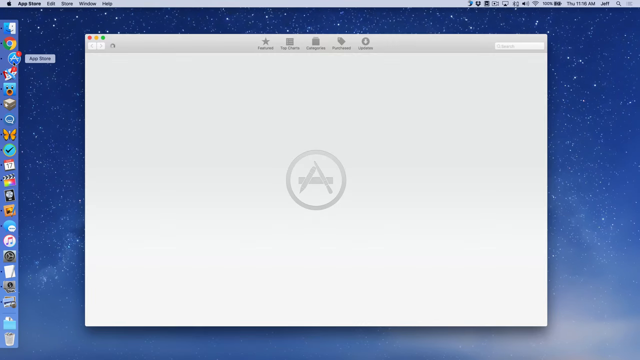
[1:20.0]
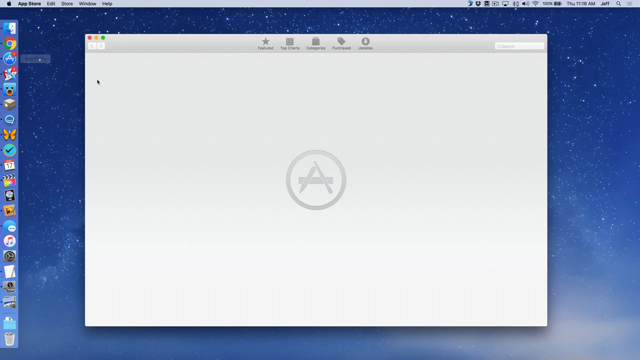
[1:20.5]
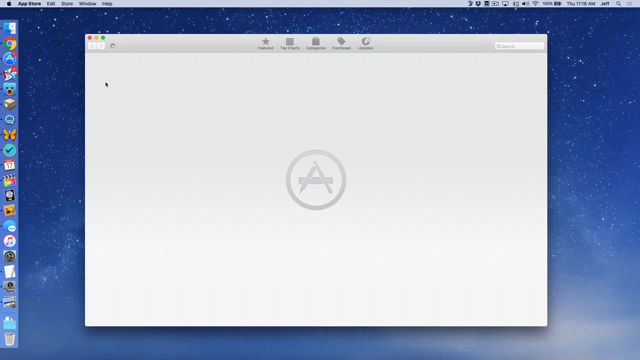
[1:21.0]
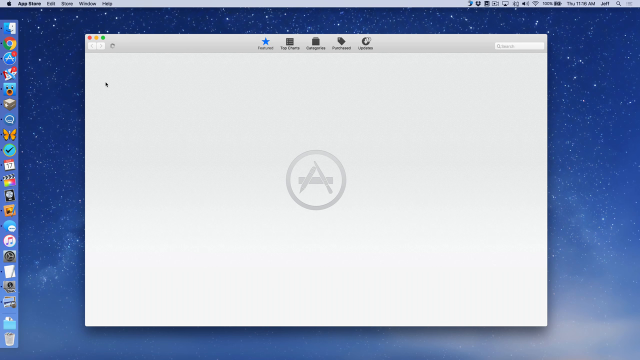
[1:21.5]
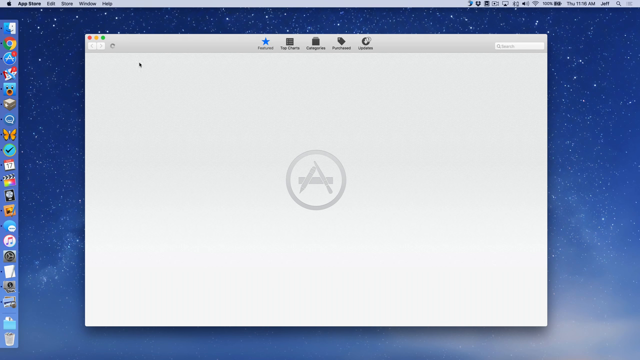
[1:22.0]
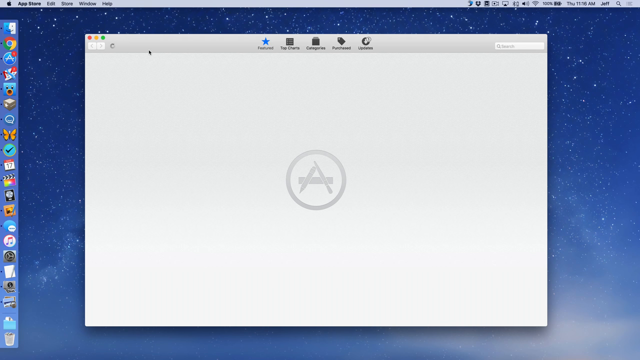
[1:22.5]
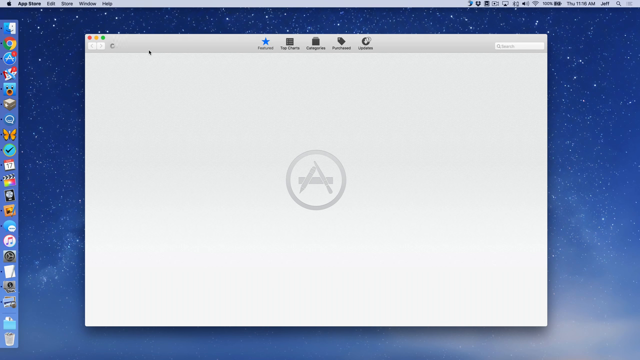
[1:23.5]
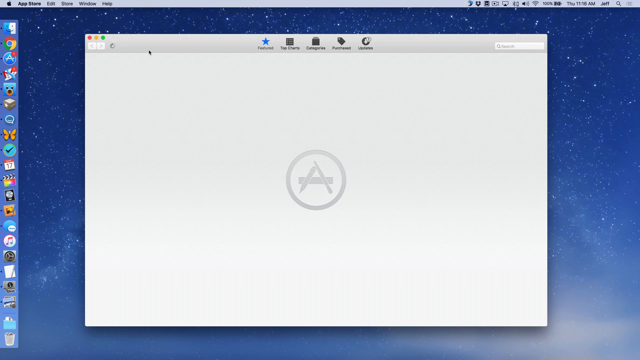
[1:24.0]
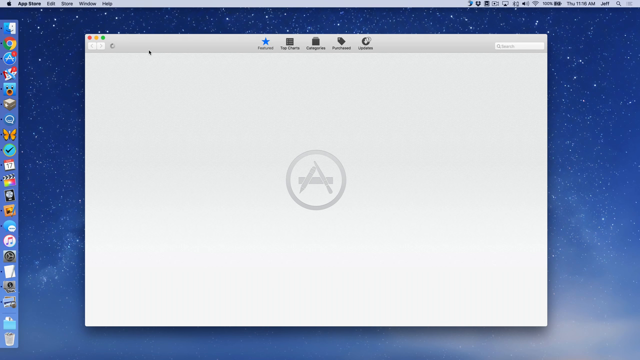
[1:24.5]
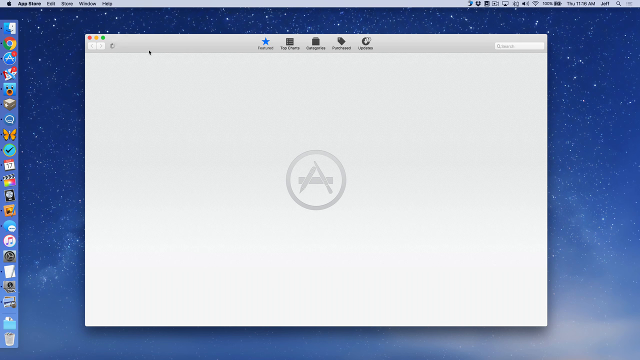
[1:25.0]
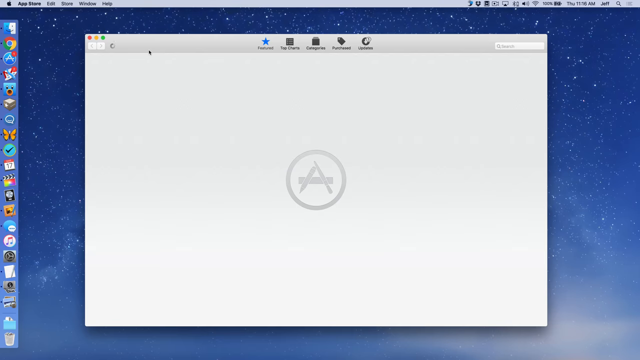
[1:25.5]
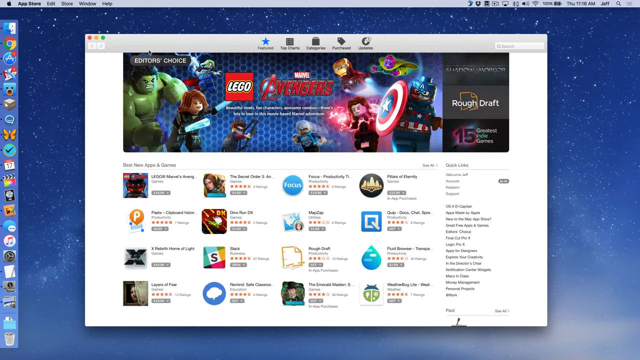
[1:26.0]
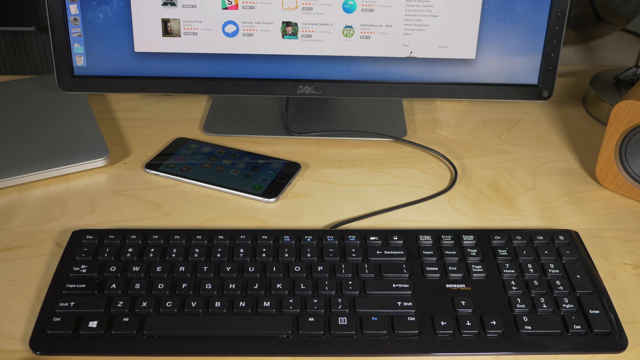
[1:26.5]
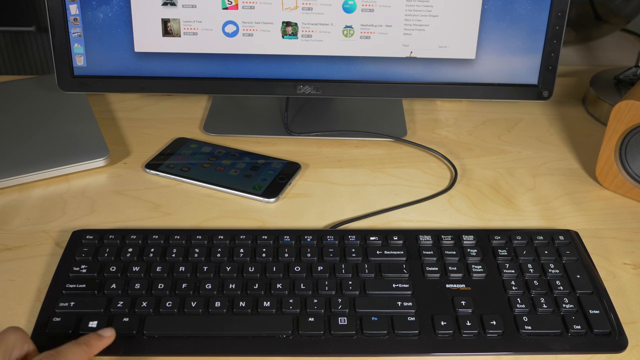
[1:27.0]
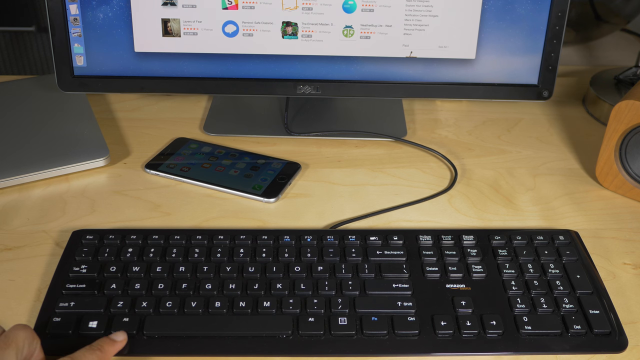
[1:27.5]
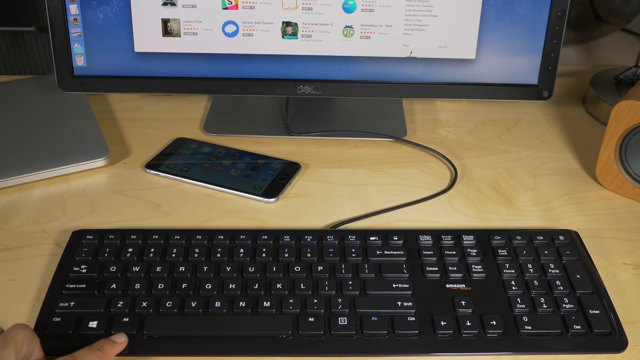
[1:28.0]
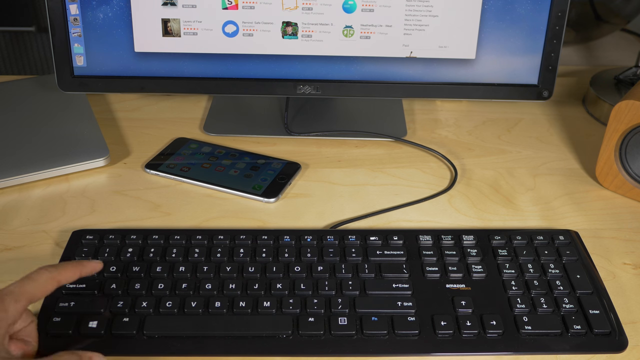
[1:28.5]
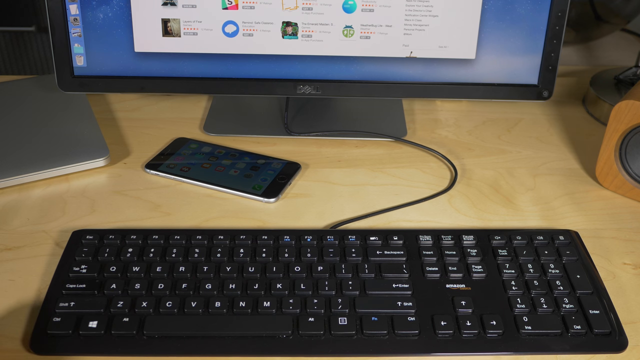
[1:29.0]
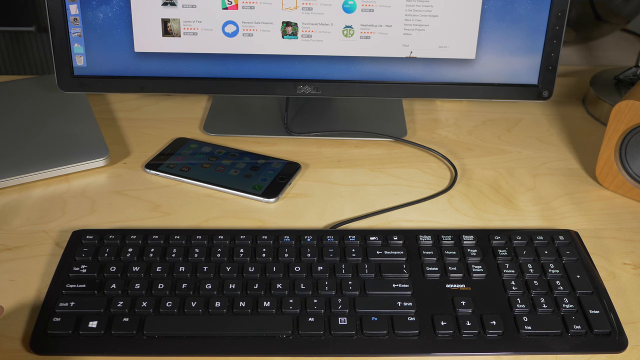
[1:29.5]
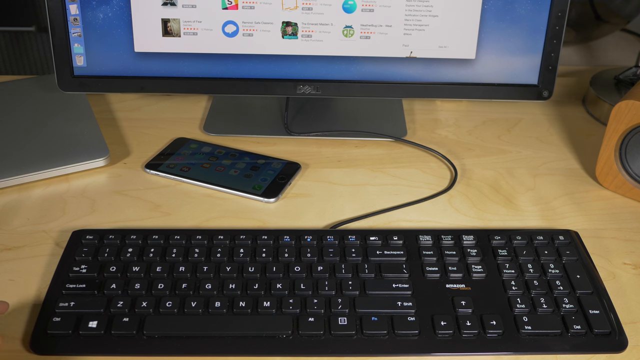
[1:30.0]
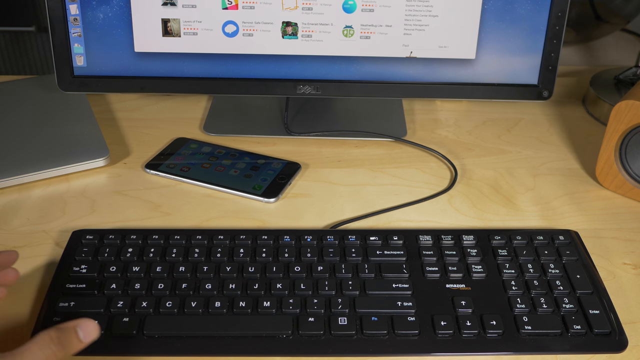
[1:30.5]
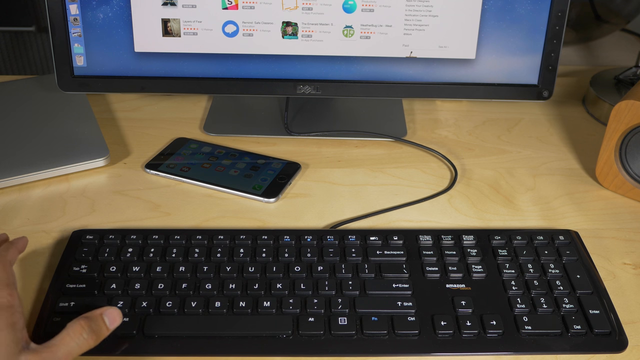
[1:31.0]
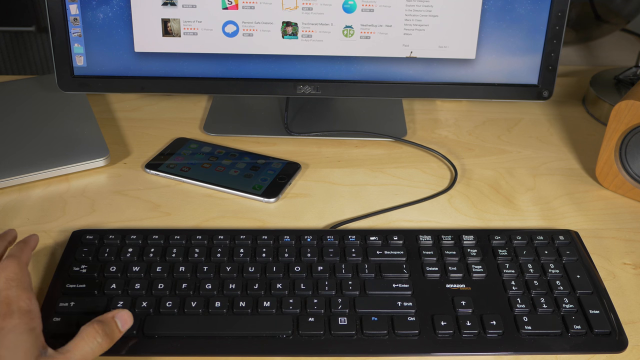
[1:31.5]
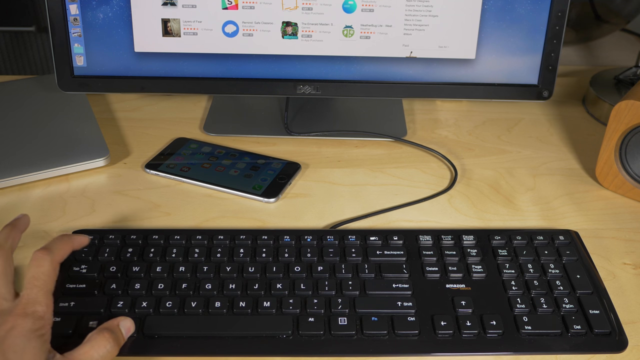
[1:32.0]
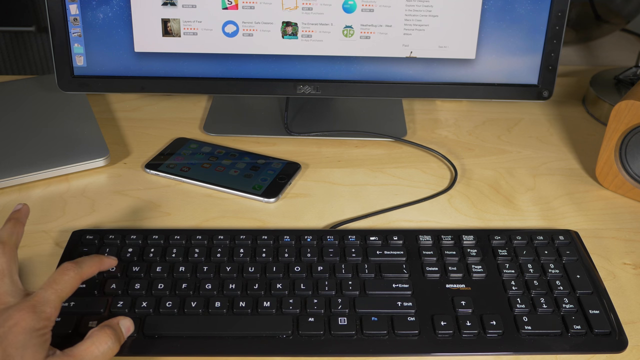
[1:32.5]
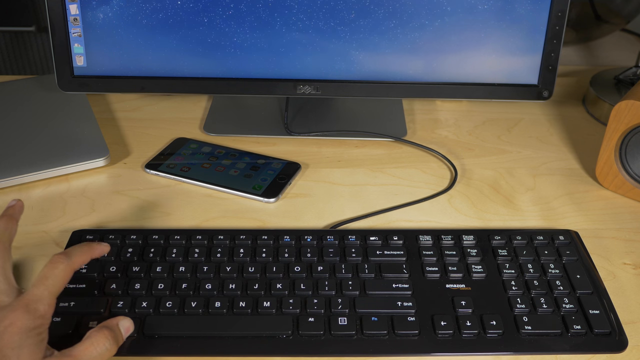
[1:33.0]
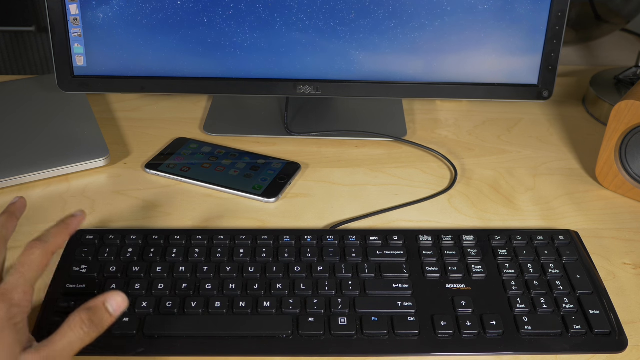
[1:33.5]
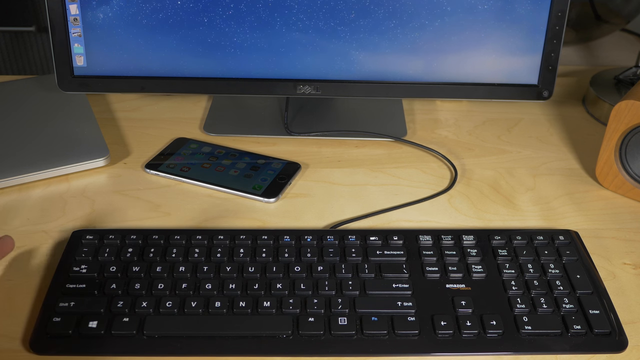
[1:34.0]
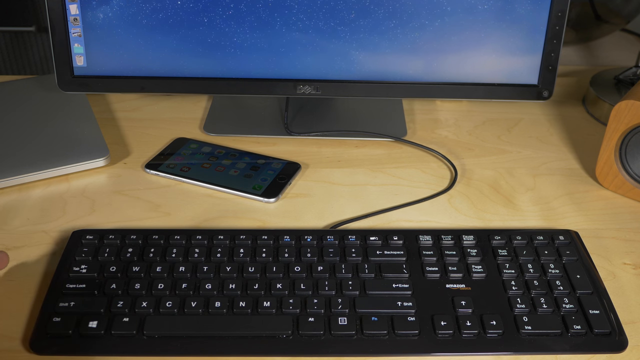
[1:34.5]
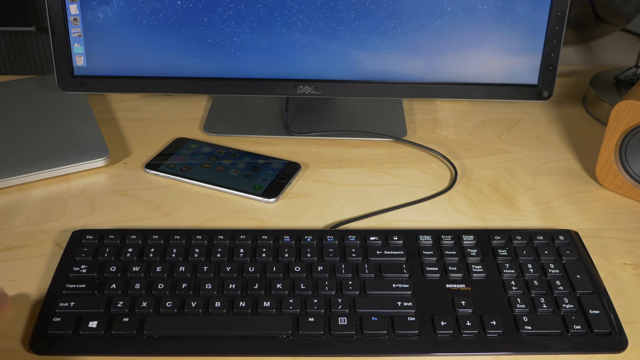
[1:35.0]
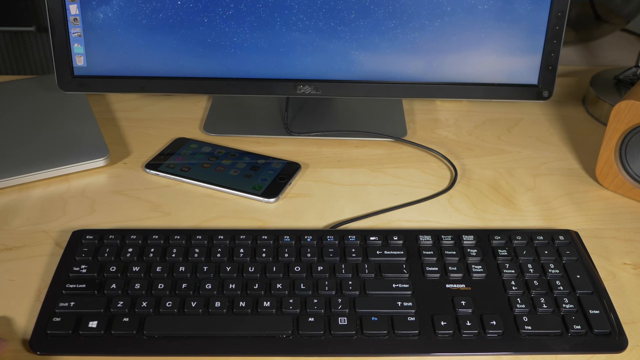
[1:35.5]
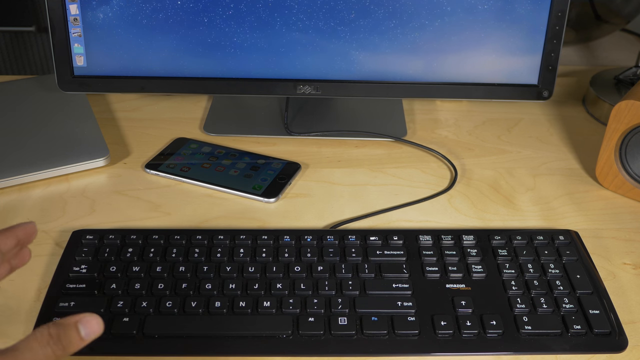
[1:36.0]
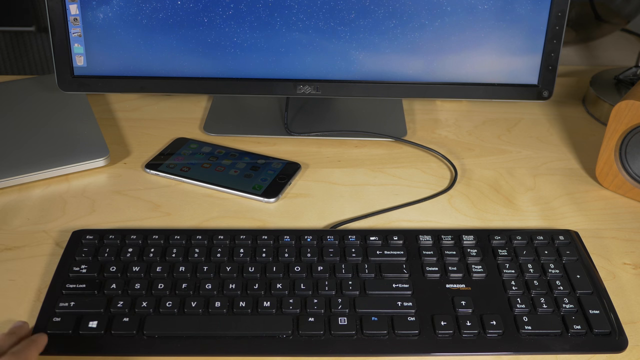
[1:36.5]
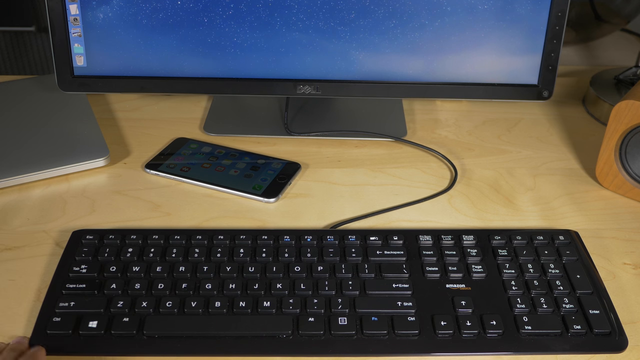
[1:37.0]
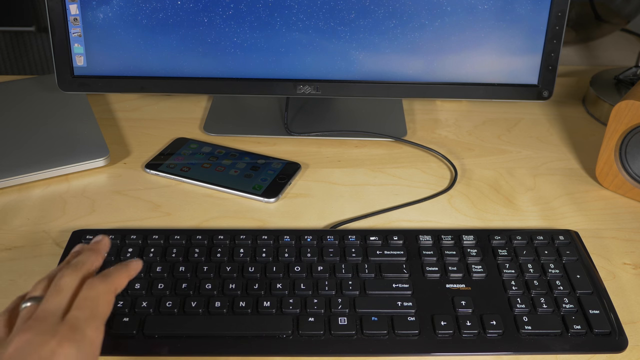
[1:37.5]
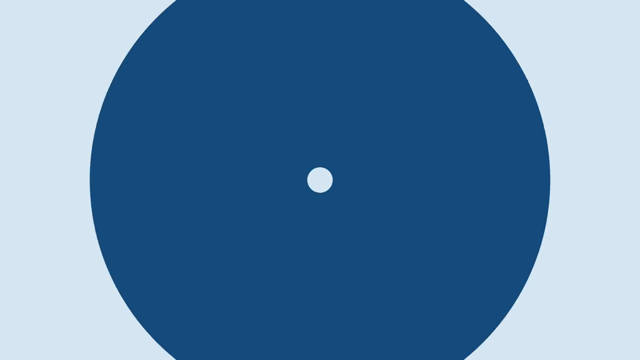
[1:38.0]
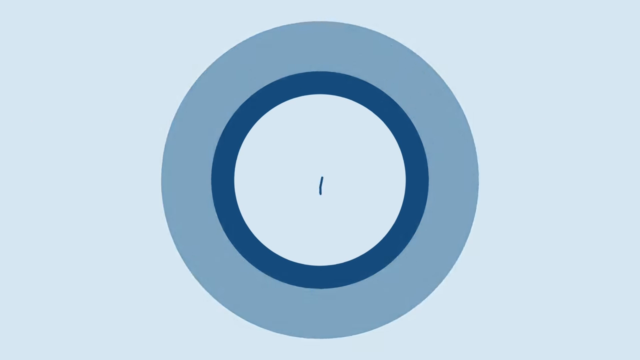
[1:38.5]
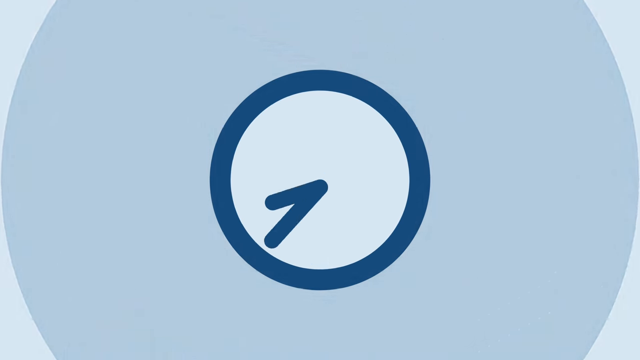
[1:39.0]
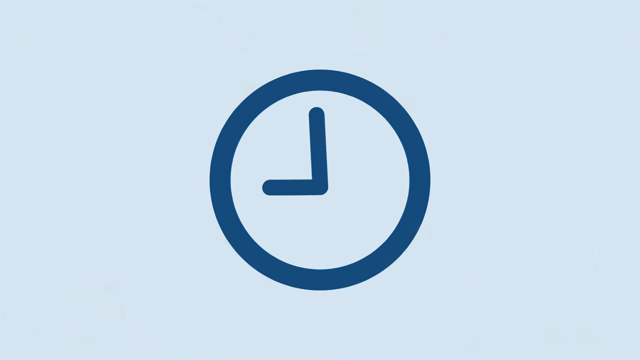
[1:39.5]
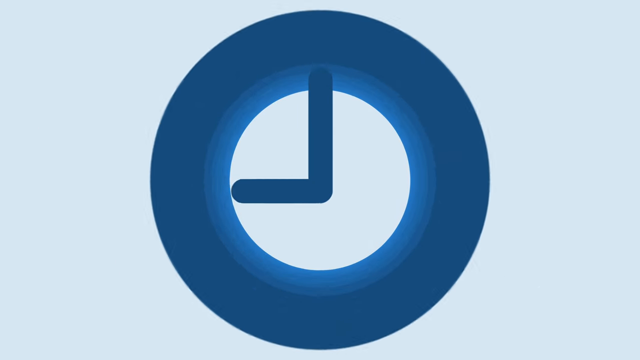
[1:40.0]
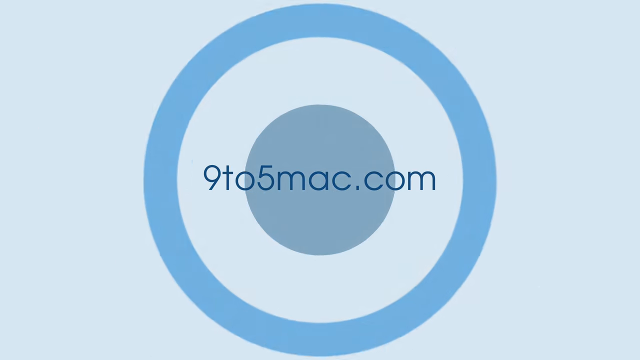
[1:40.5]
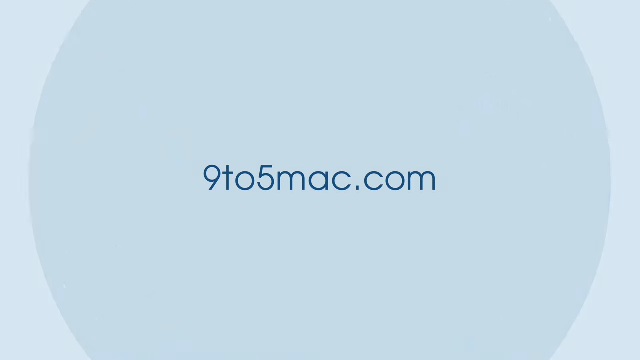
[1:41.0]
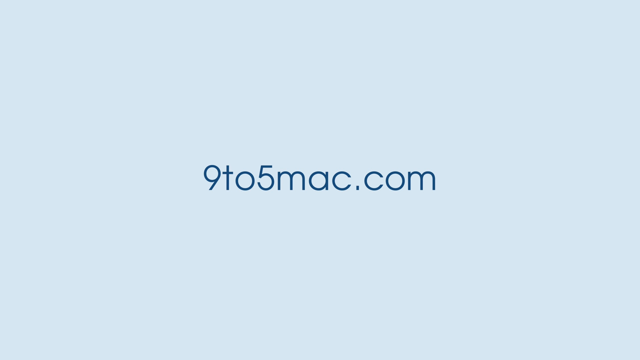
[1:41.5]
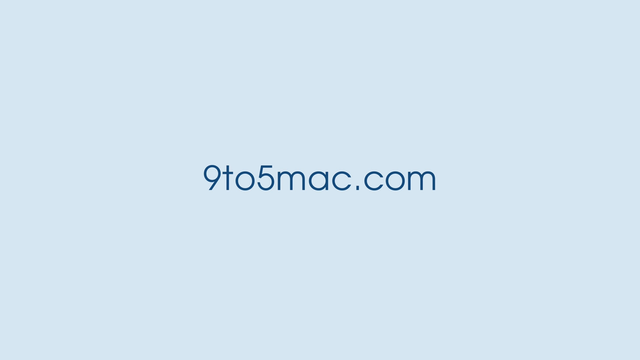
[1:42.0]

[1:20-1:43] A computer screen that looks like it could be a desktop has a star background, a panel on the left side and a gray screen at the center. It looks like the App Store has been chosen and is loading, with a loading icon at the top left and a mouse cursor visible. A store with what looks like an Avengers banner briefly appears, then the view quickly goes back to an image of a keyboard and a smartphone on a desk, with a Dell monitor at the very top. A person points at the Alt key and looks like they point at the Q key, then presses Alt and Q together, which changes the image on the monitor. A new page with a white background appears, showing a green clock whose hands move, followed by a flash and the text "9to5mac.com".